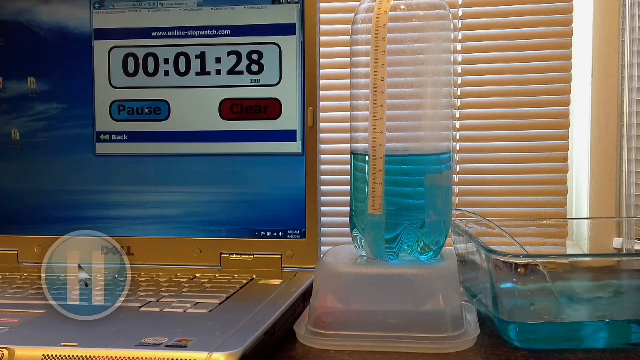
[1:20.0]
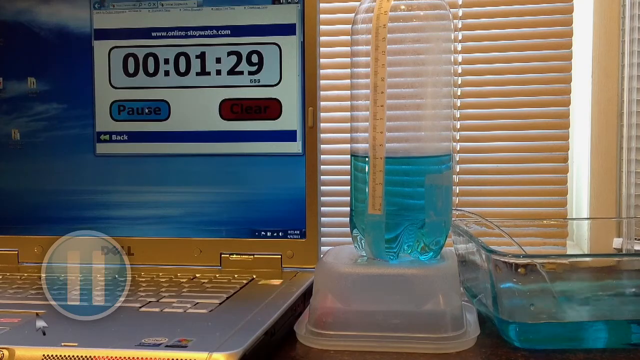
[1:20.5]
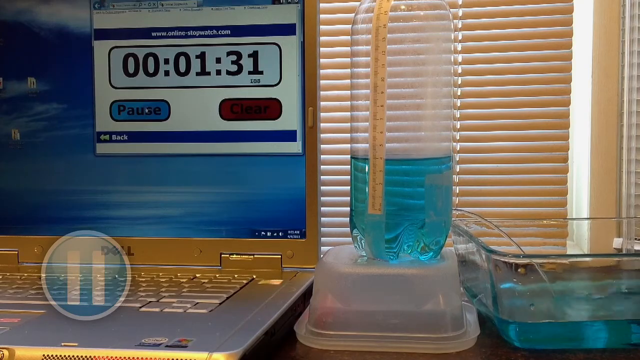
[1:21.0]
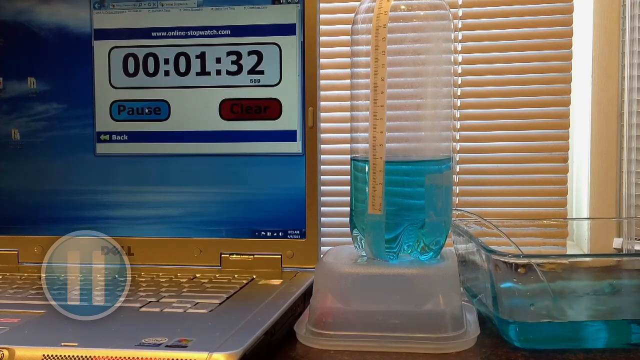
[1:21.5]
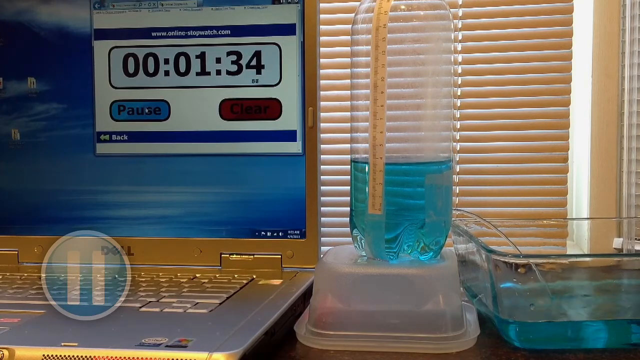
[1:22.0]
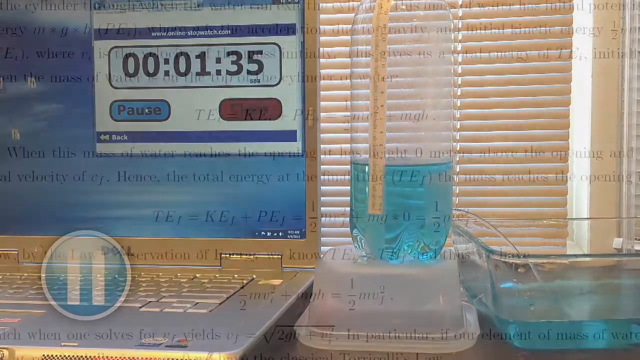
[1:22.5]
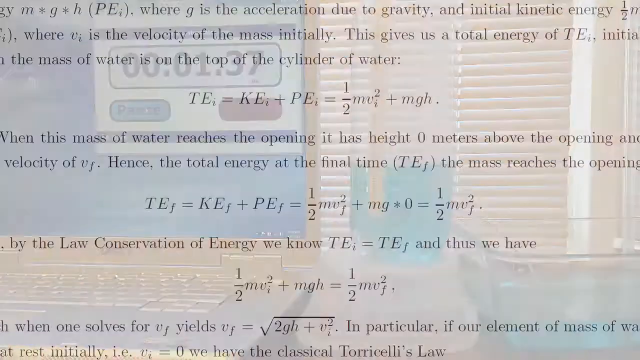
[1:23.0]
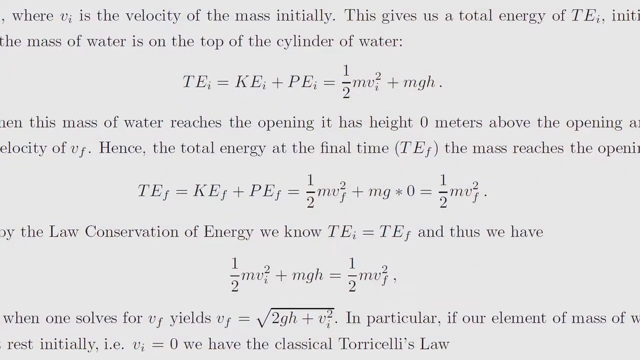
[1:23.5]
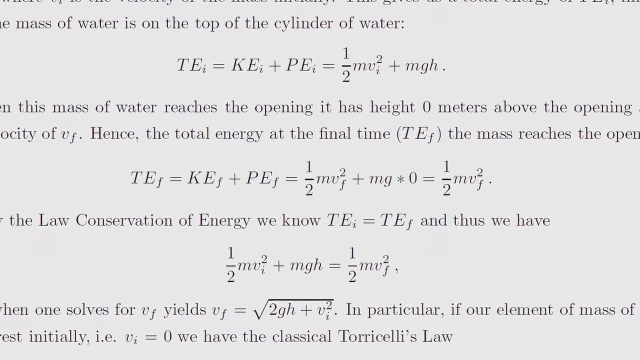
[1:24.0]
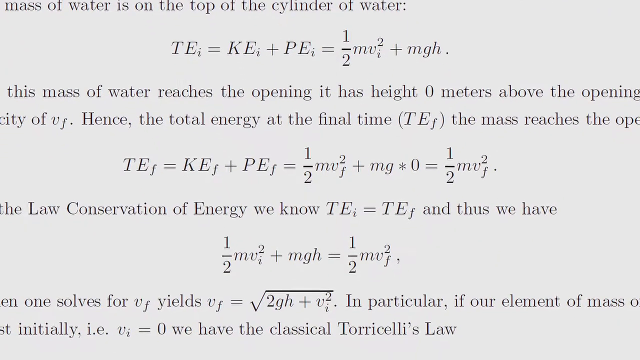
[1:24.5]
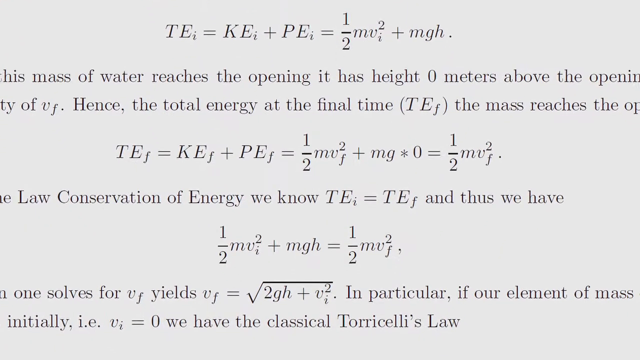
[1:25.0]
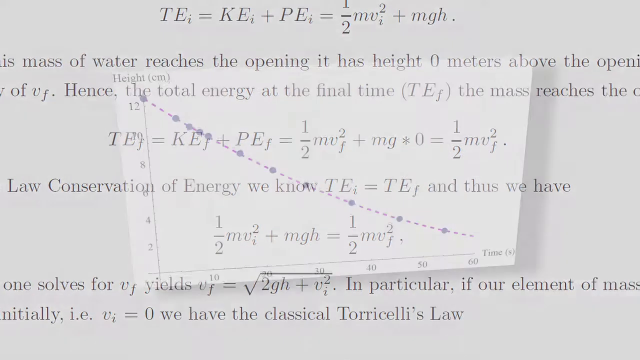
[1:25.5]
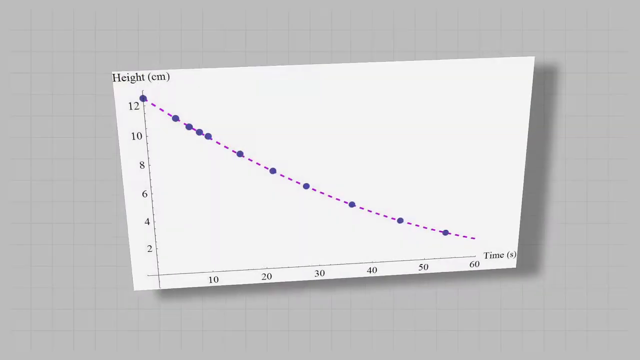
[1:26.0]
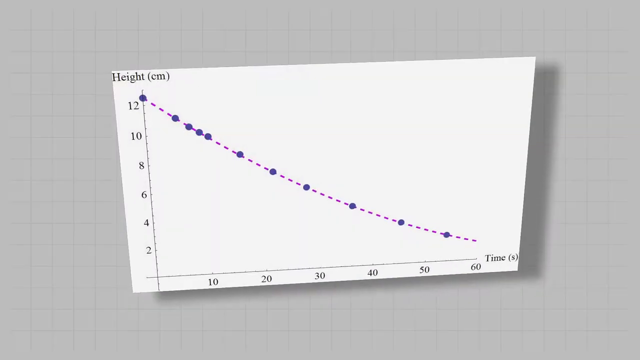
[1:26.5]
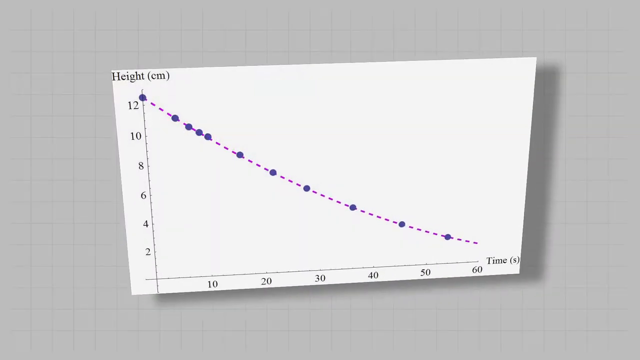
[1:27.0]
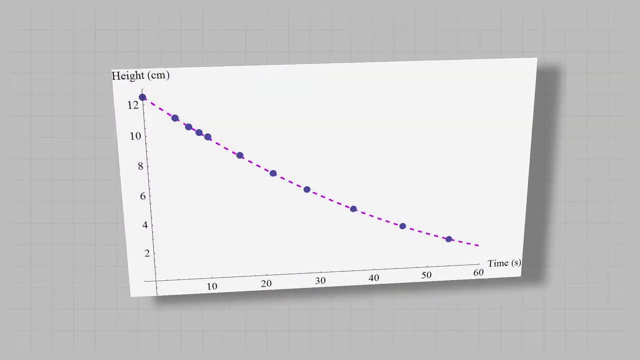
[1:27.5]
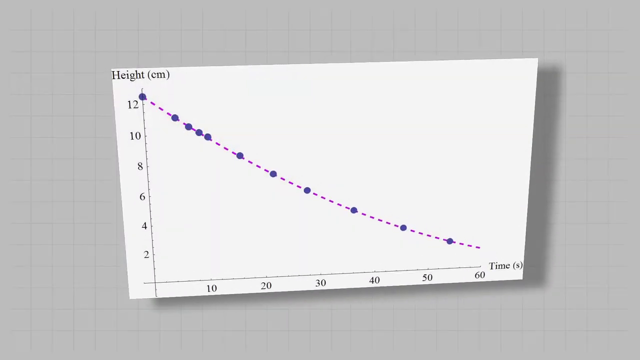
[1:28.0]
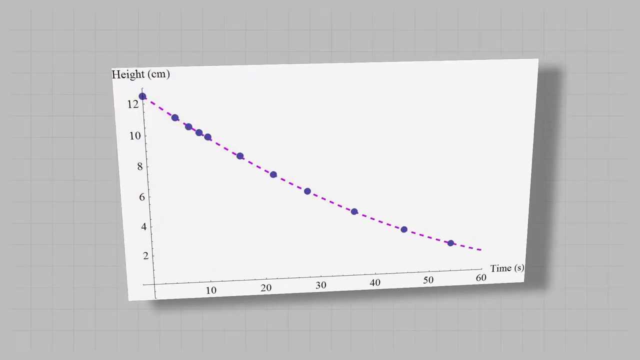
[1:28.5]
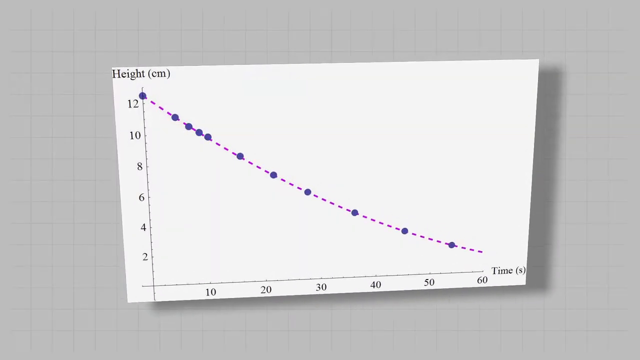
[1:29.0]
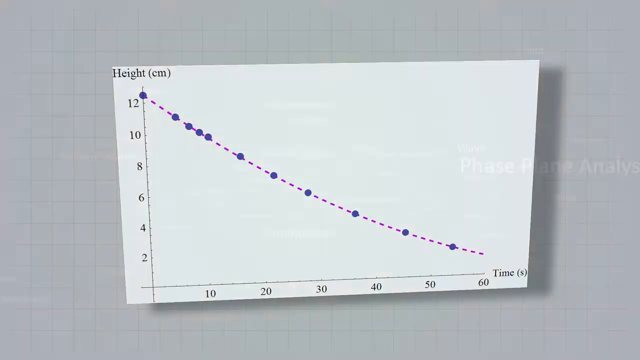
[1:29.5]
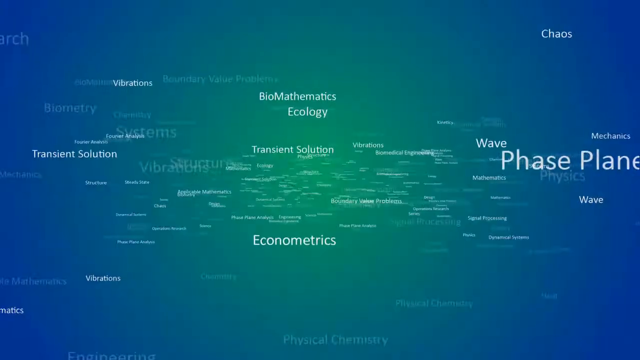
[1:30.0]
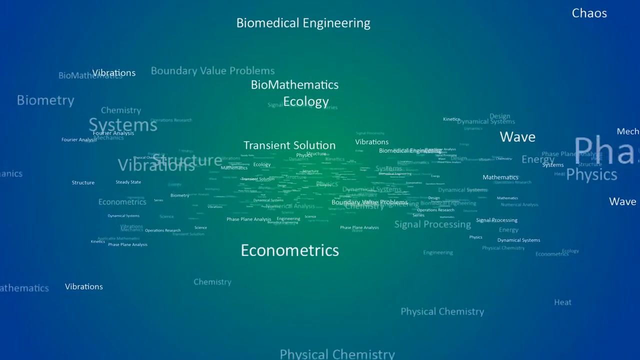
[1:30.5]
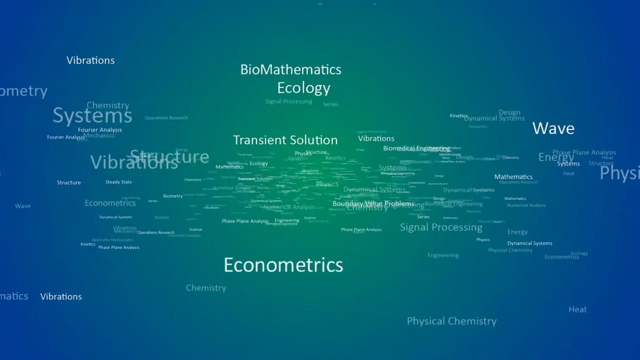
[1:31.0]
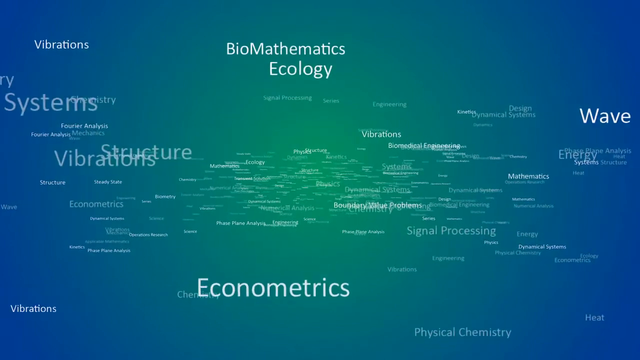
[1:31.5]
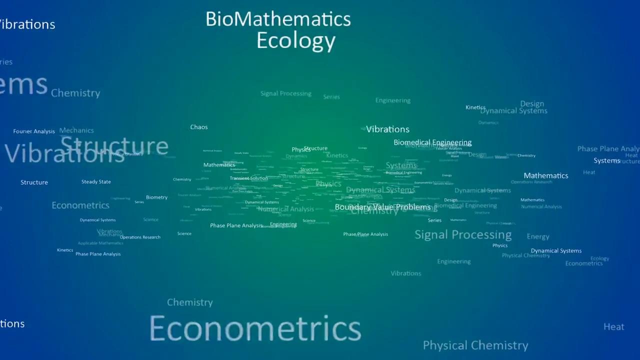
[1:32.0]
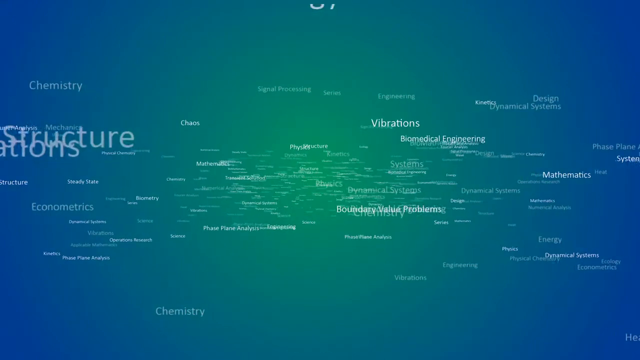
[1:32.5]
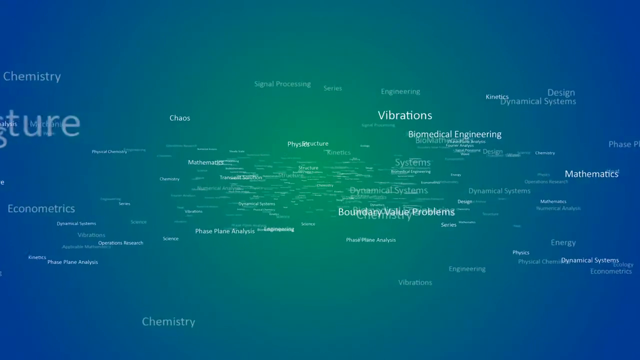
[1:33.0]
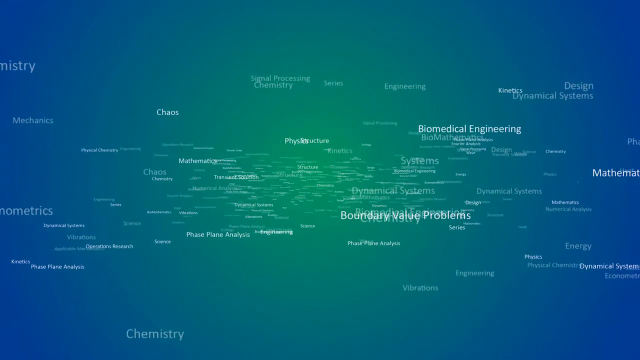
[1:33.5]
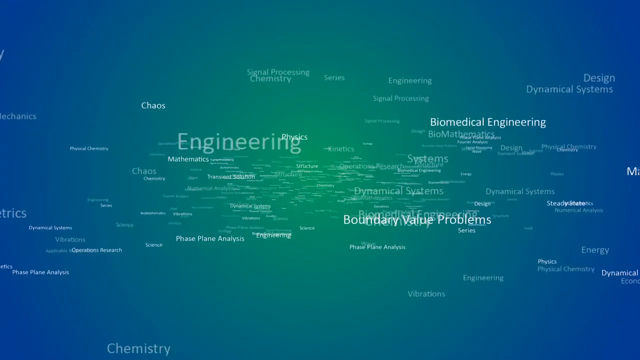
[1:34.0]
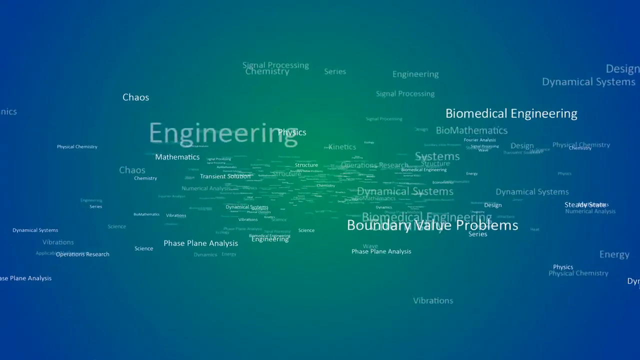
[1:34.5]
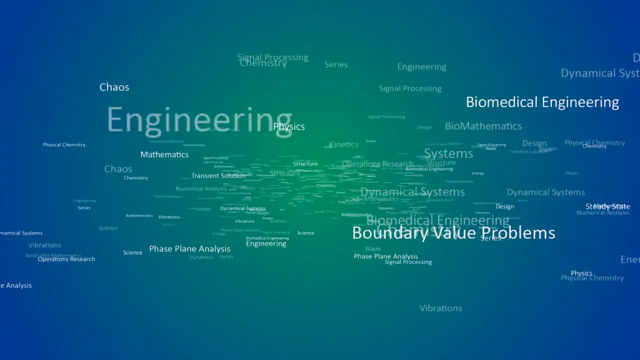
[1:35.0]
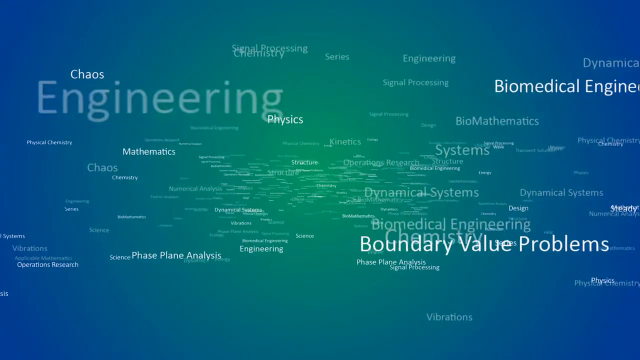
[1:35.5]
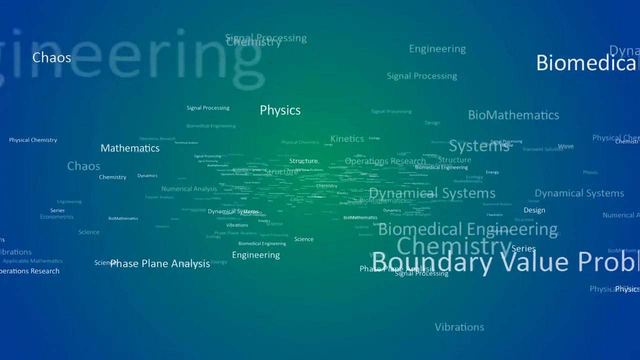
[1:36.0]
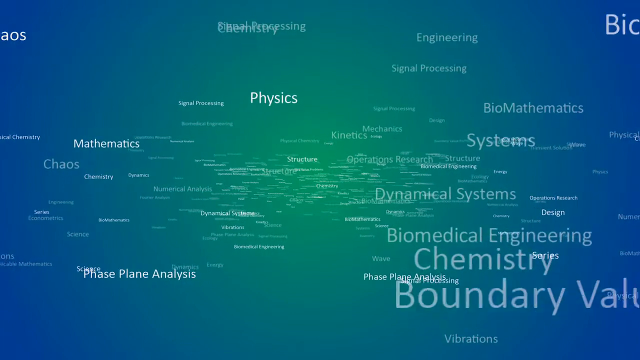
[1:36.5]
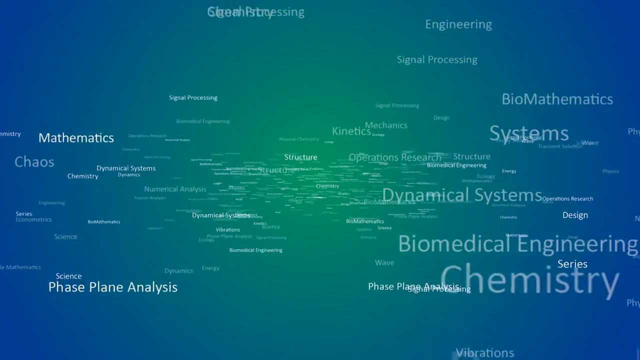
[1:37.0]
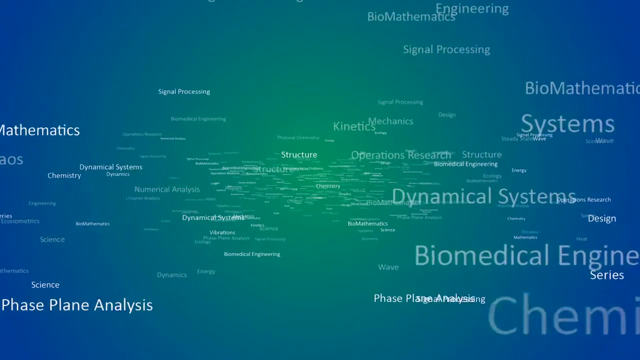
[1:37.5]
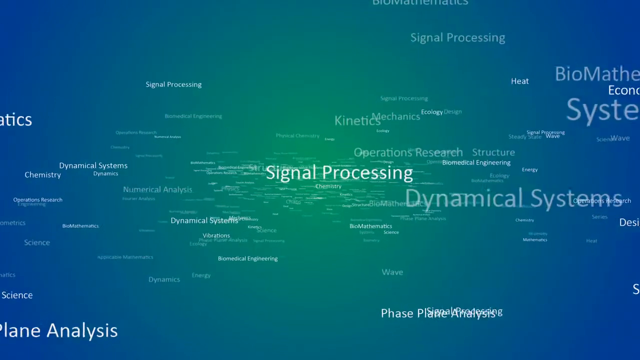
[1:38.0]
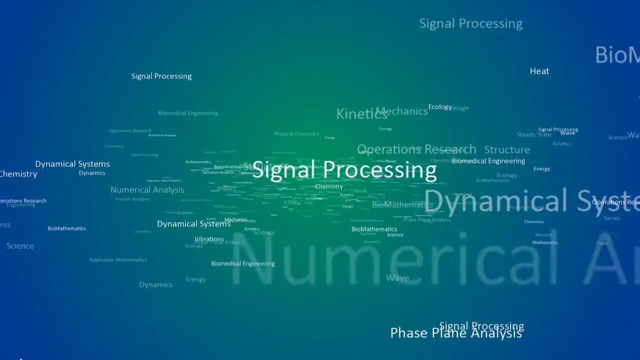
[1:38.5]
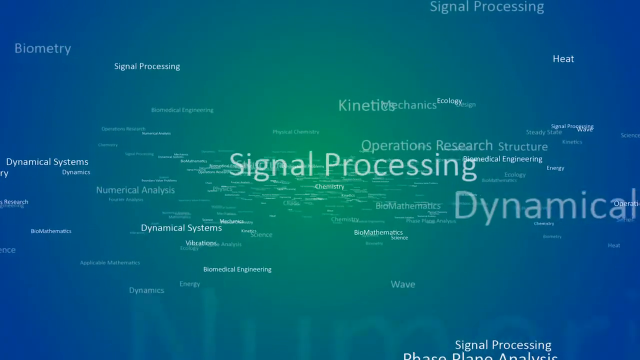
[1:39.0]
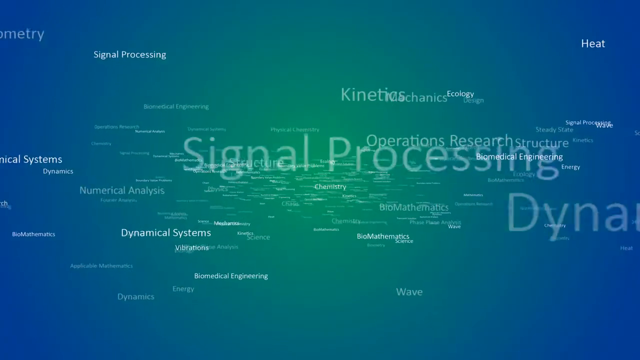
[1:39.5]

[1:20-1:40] A much closer view shows the same scene with the Dell computer, now much further forward. The item that looked like a straw is actually some sort of measuring length, running from 0 at the bottom to 15 just before it disappears at the top of the screen. There might be some sort of tube draining liquid from the bottle into the container to its right, which is flat on the table. The bottle appears to be elevated on the empty container, which looks like a relatively transparent plastic container. There is considerably less pale blue liquid in the bottle, and there appears to be more in the container on the right. A faint white circle on a blue background with two vertical lines, a pause symbol, now obscures some of the keyboard and most of the word Dell. When the image starts moving, the graphic that looked like a clock turns out to be a stopwatch, which may be timing how long it takes the liquid to drain from the bottle into the tray next to it.